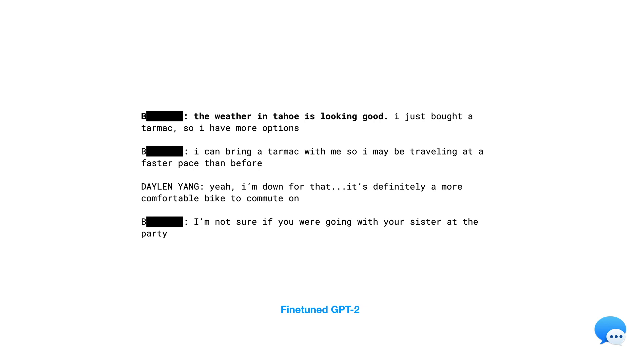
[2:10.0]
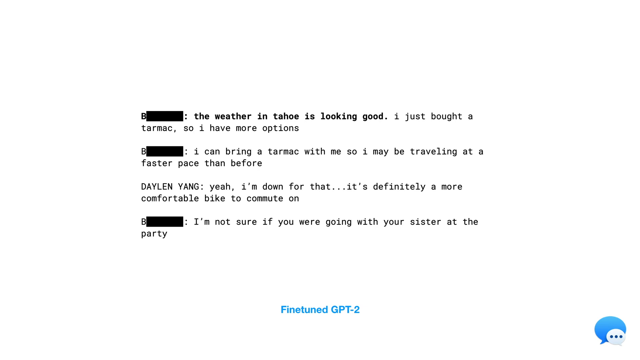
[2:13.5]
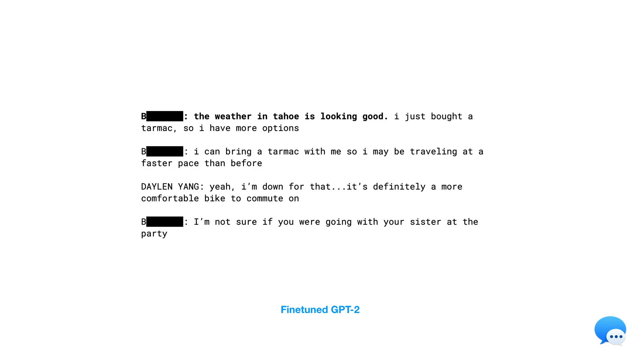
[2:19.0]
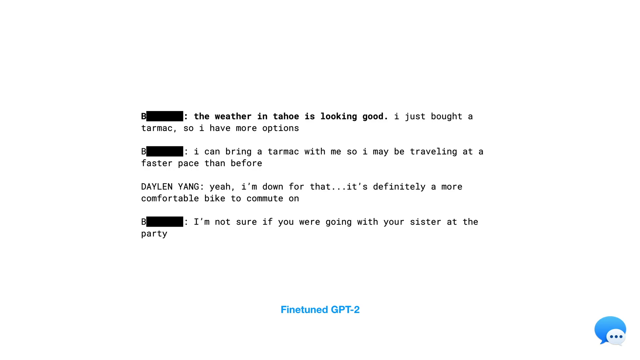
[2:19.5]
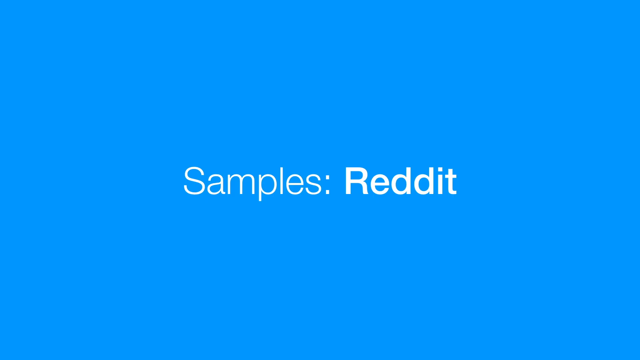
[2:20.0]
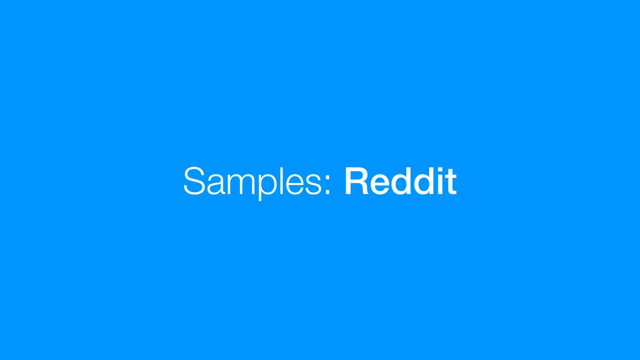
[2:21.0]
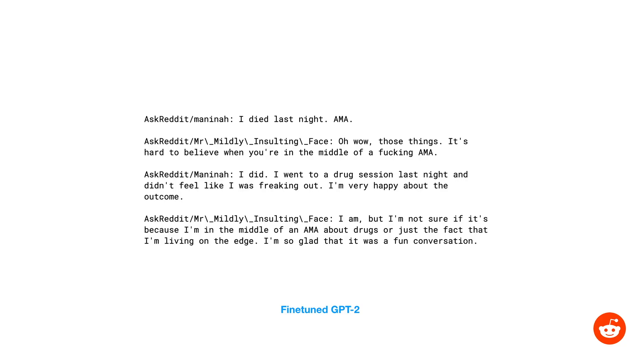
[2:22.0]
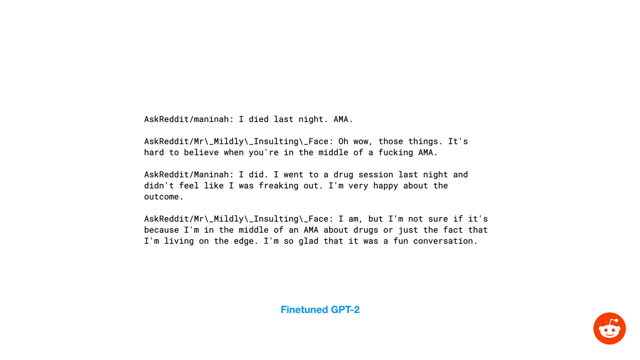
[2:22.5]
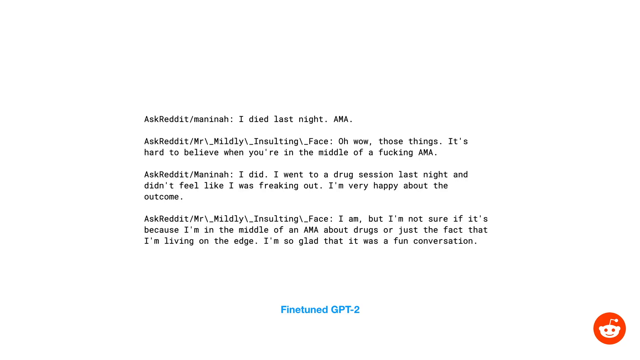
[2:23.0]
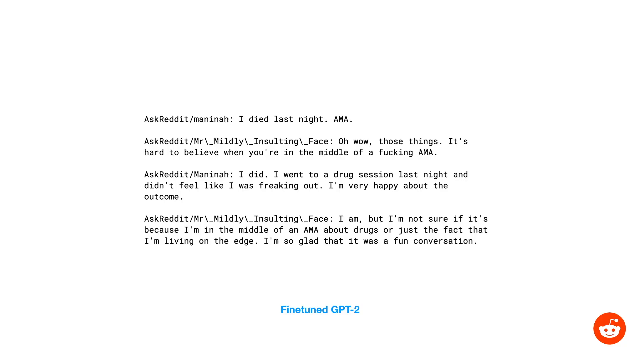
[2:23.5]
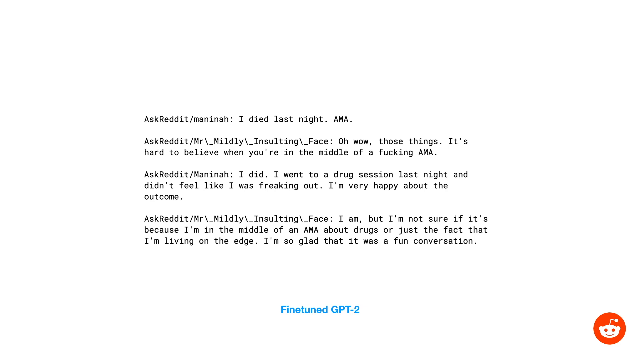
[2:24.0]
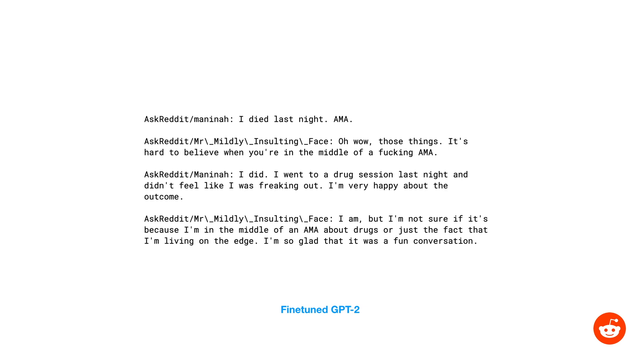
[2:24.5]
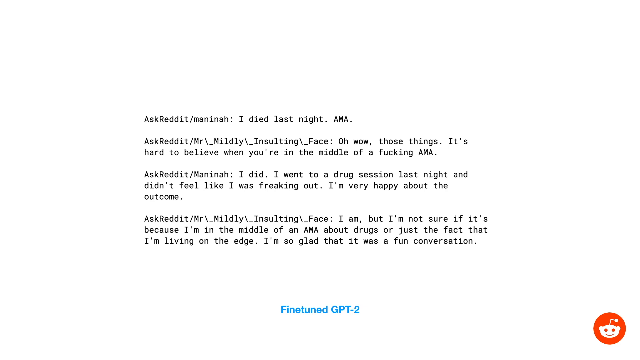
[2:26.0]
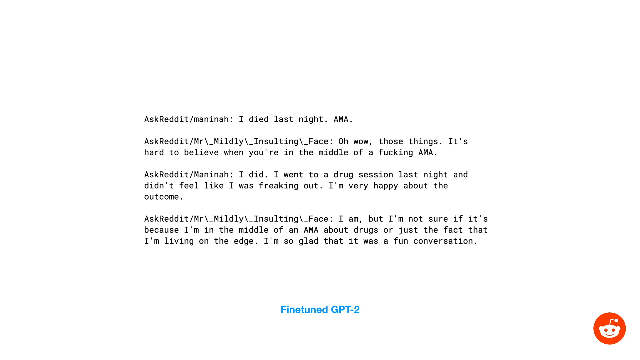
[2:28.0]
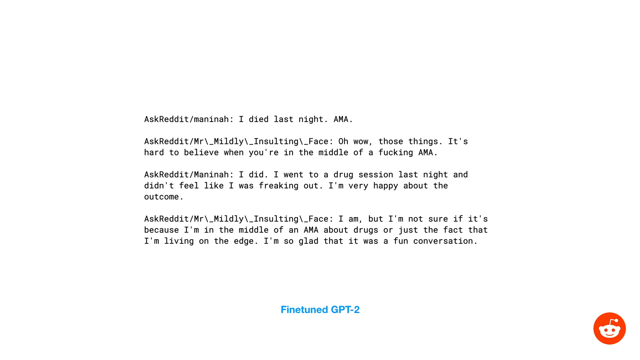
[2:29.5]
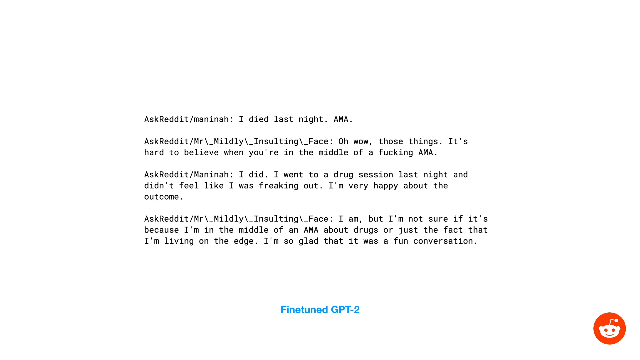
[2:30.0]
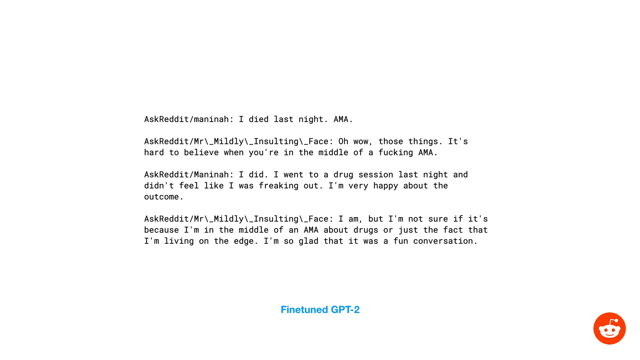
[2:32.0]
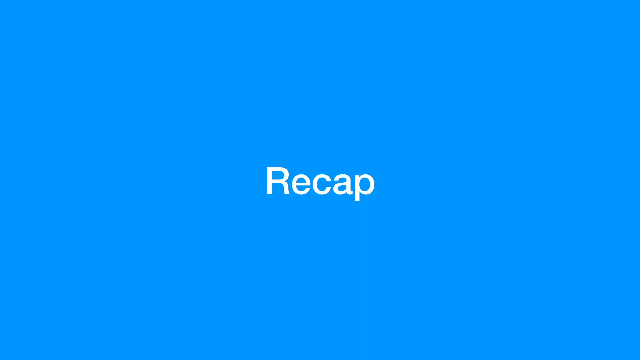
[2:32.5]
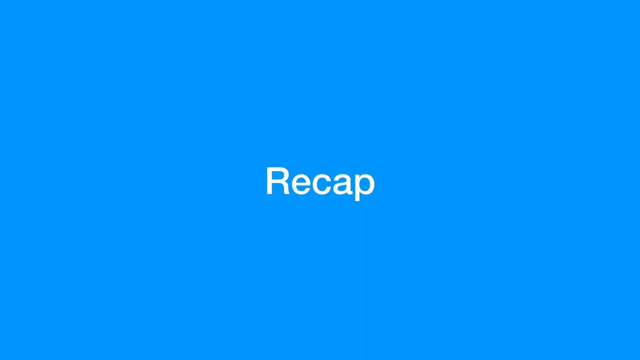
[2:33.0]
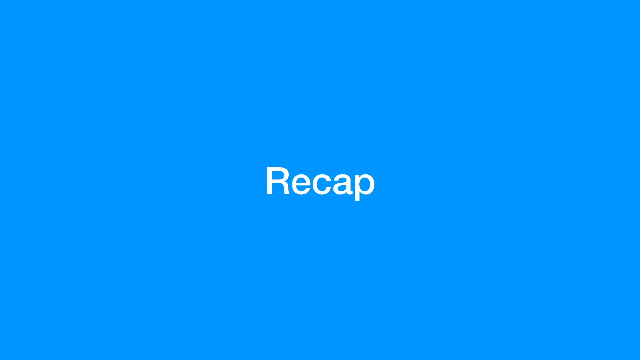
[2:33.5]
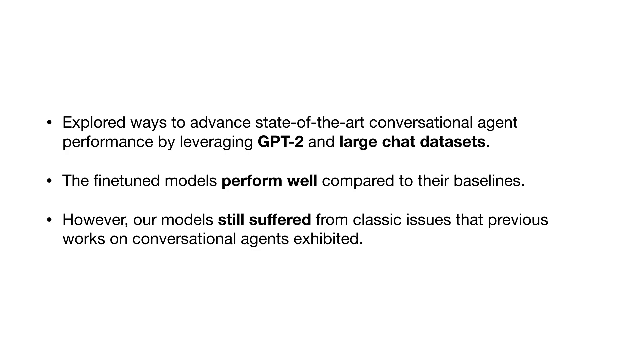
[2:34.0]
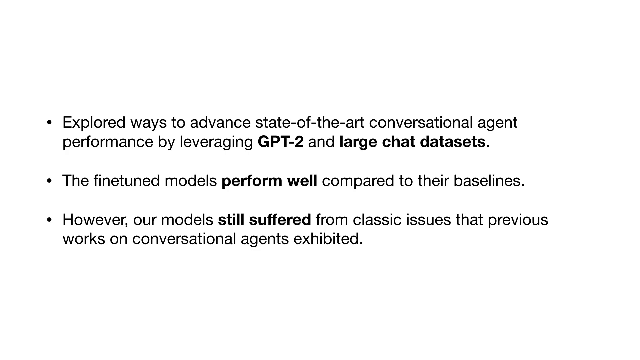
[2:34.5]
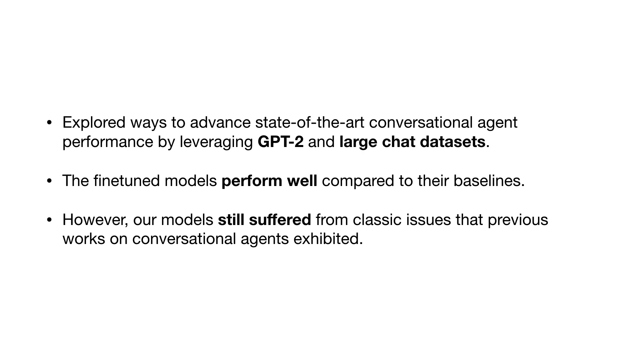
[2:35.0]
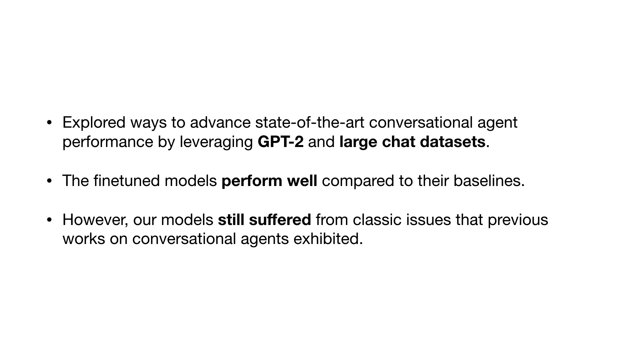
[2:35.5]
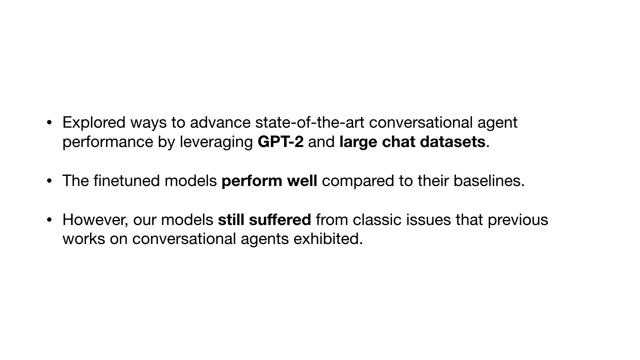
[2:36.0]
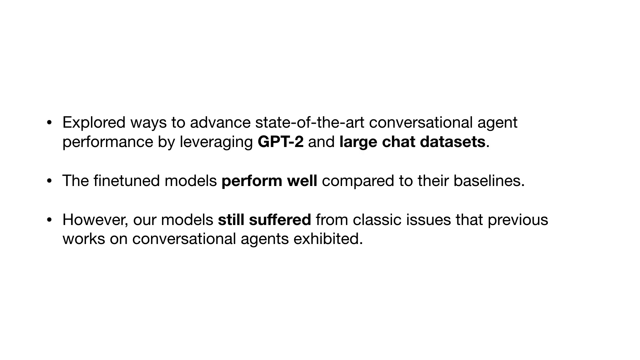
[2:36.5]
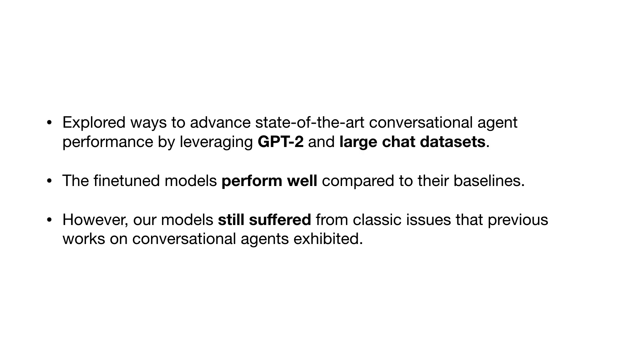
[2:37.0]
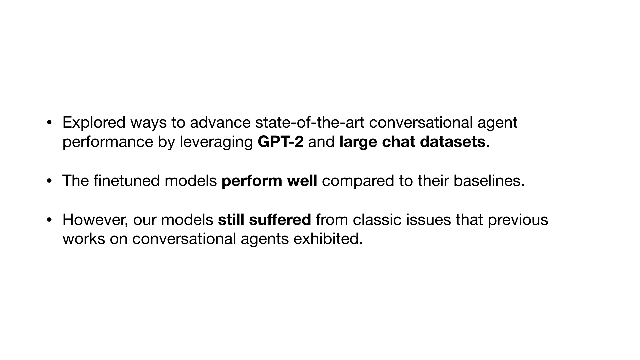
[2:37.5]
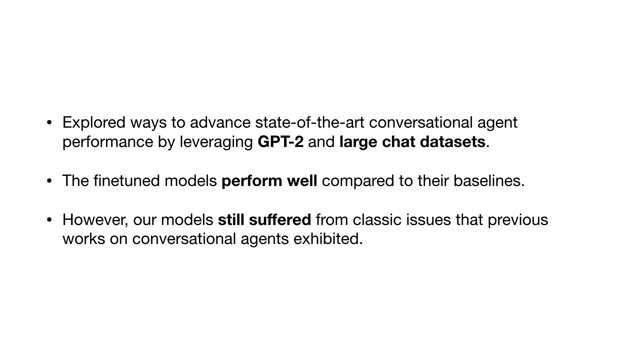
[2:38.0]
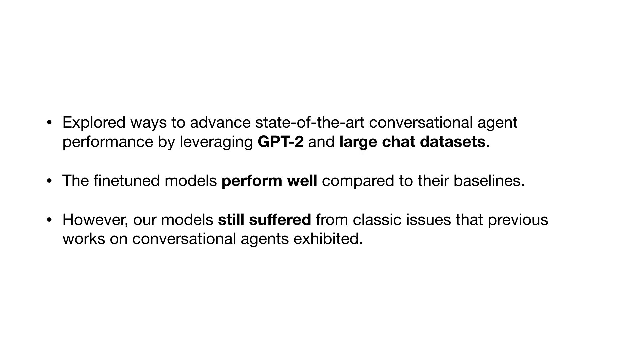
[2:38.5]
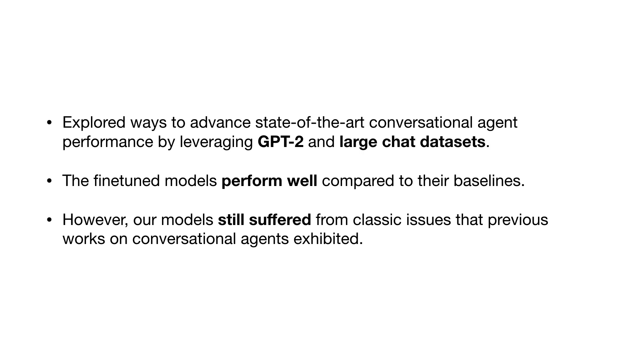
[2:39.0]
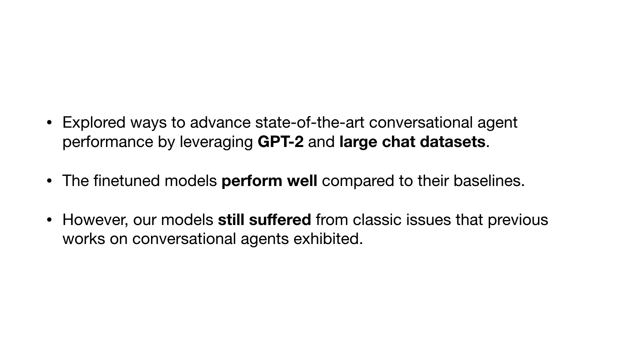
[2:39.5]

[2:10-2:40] These messages appear to be between Dylan and actual people, possibly friends, rather than a GPT. The conversation about the weather and being stuck on a tarmac stays on screen for a few seconds, then a blue slide reading "samples Reddit" appears. After two or three seconds the video switches to a series of Reddit comments. The first, from a user, begins "I died last night," and someone replies "Oh, wow." The first user then writes "I went to a drug session last night and didn't feel like I was freaking out. I'm very happy about the outcome." The other person replies again, ending with "I'm so glad it was a fun conversation." This stays on screen for quite a few seconds before the video moves to a blue slide that says "recap," followed by a white slide that begins "explored ways to advance the state of art conversation agents" and continues "The fine tune models perform well compared to their baselines. However, our models still suffer from classic issues that previous work on conversational agents exhibit."